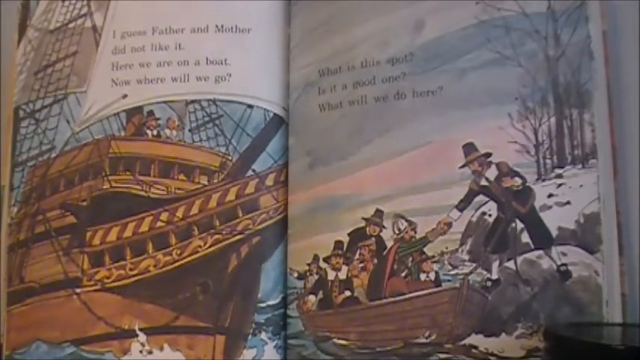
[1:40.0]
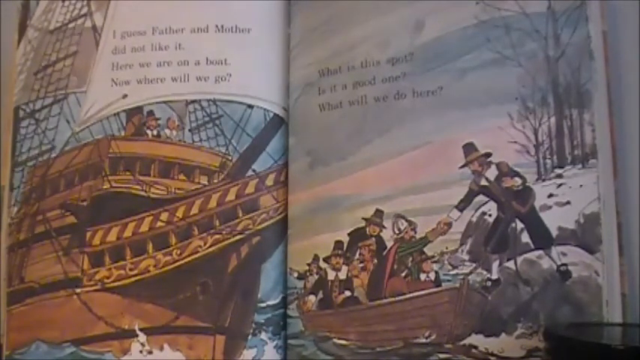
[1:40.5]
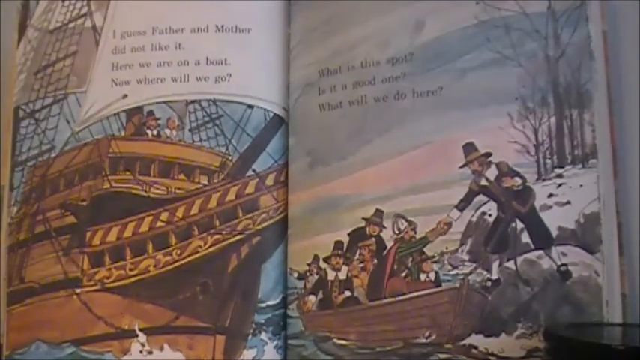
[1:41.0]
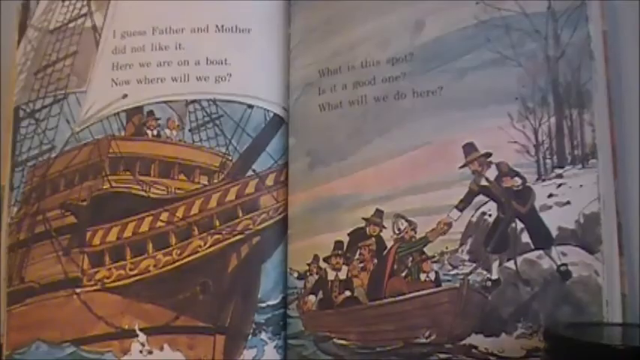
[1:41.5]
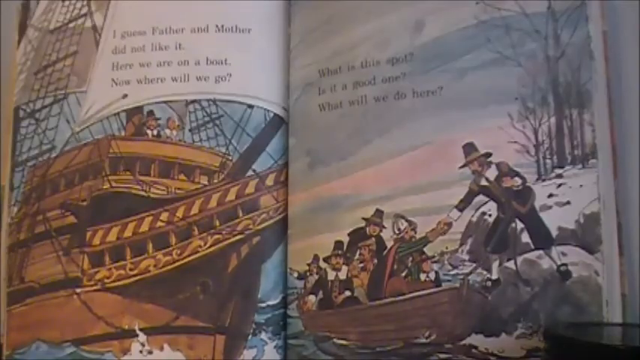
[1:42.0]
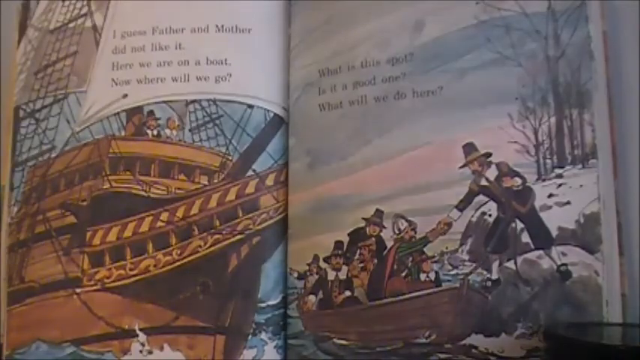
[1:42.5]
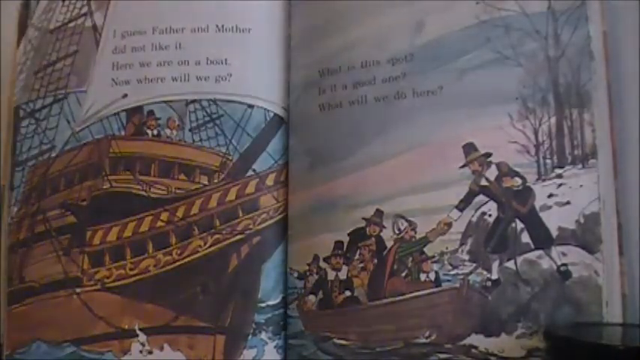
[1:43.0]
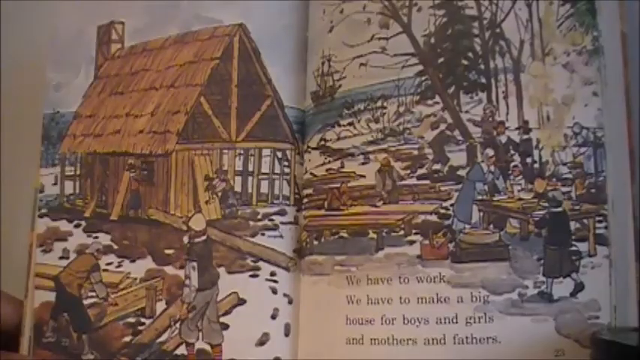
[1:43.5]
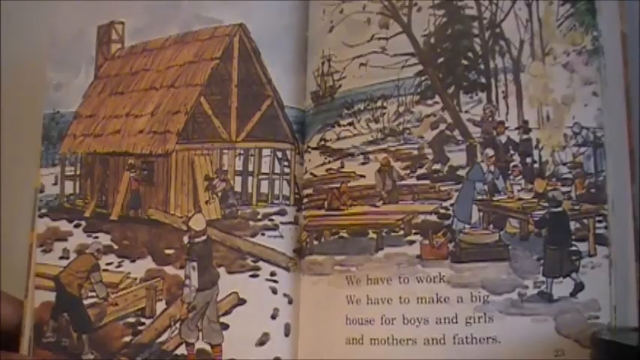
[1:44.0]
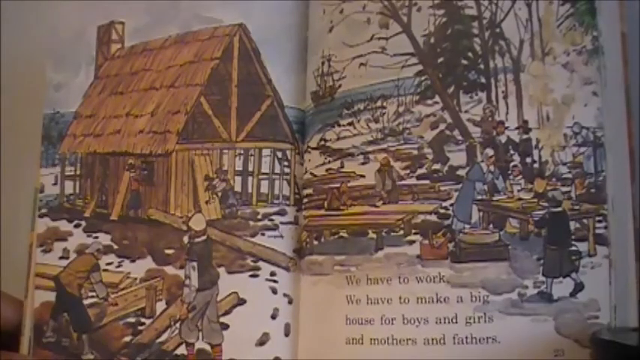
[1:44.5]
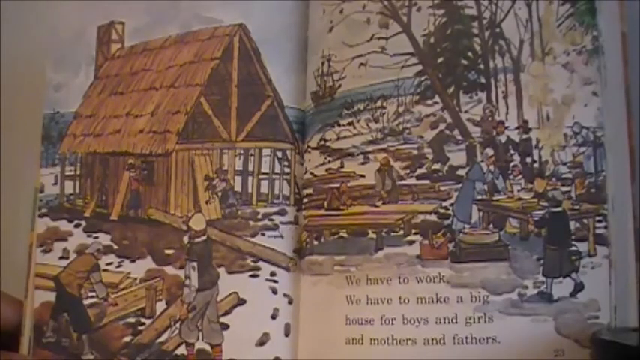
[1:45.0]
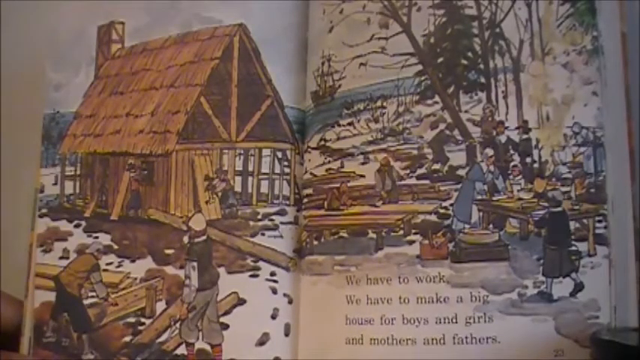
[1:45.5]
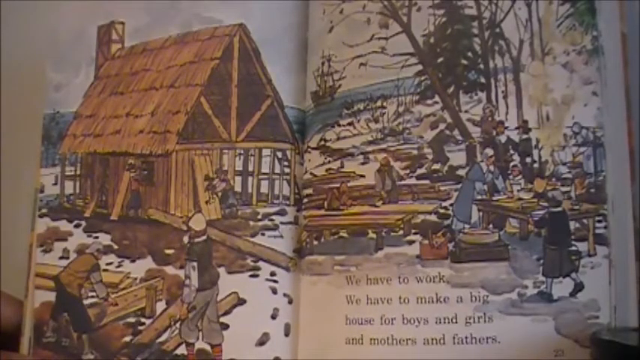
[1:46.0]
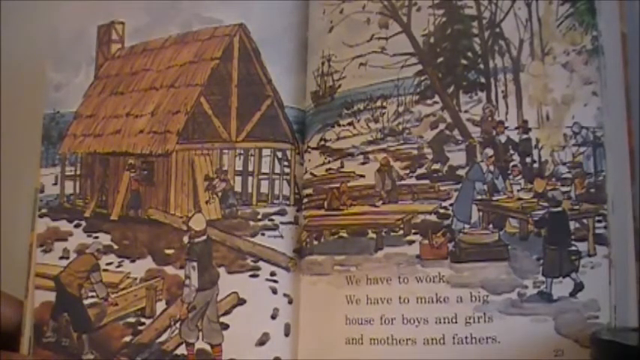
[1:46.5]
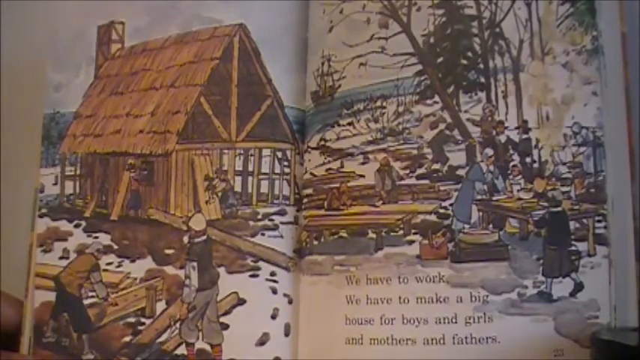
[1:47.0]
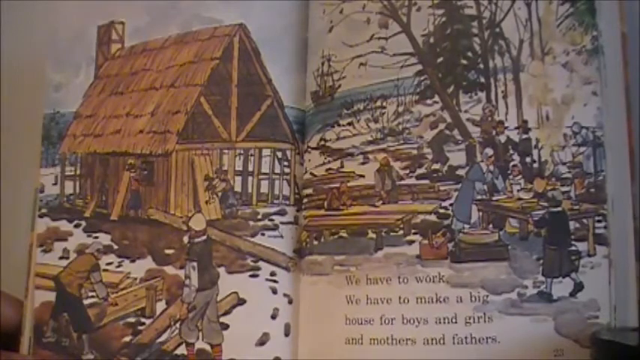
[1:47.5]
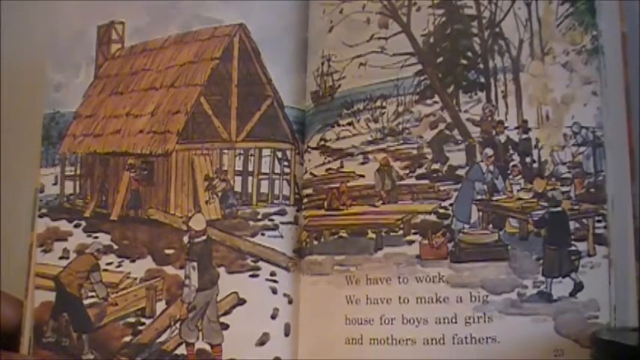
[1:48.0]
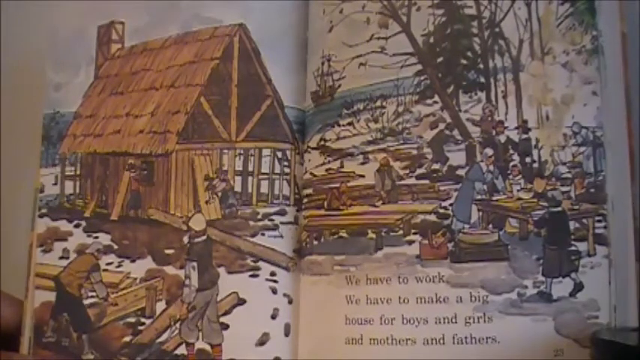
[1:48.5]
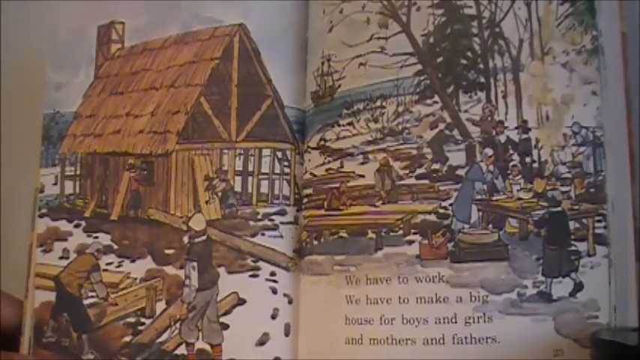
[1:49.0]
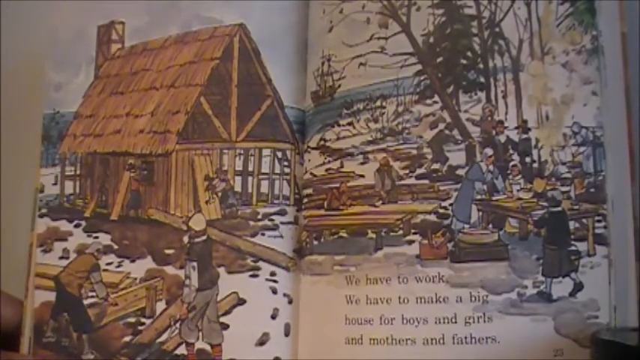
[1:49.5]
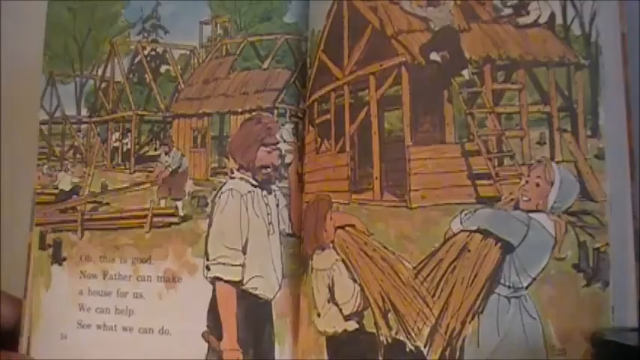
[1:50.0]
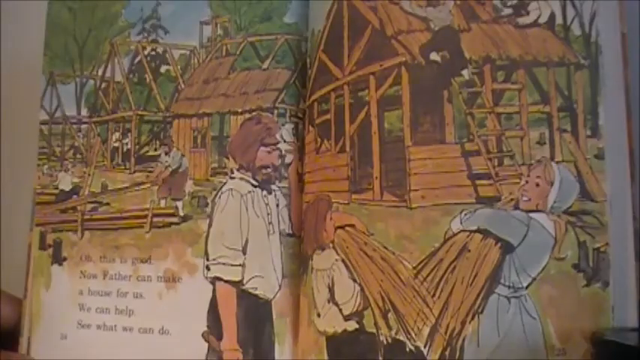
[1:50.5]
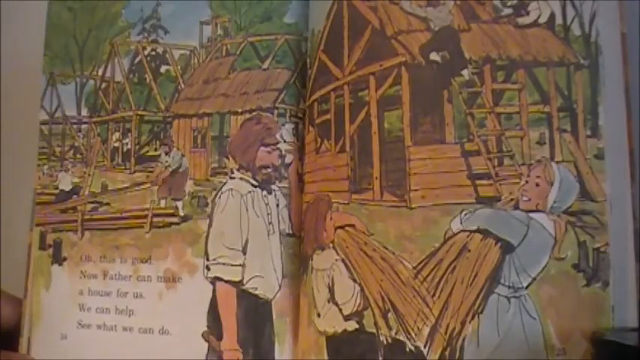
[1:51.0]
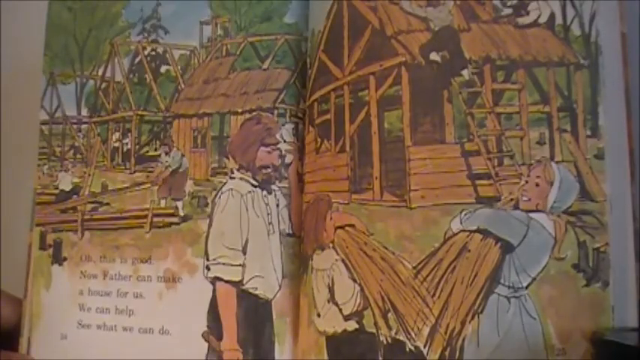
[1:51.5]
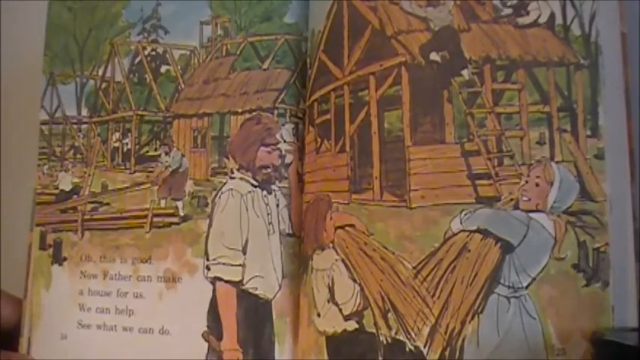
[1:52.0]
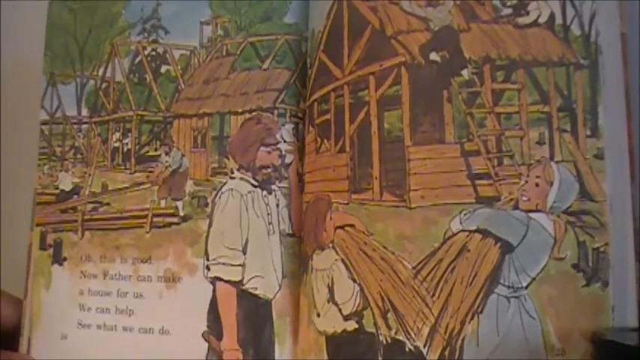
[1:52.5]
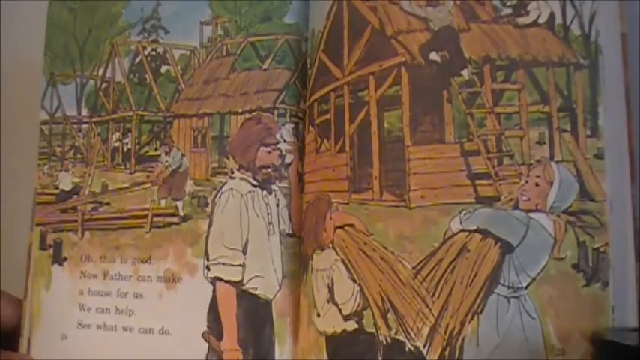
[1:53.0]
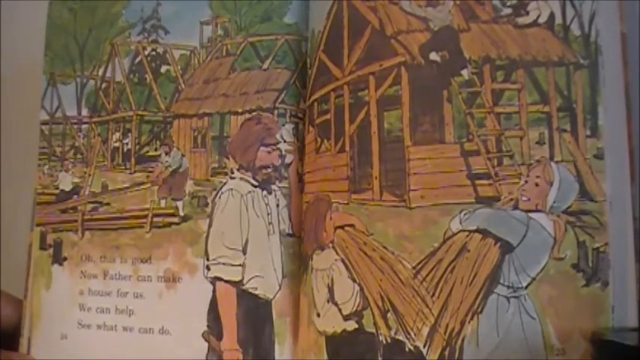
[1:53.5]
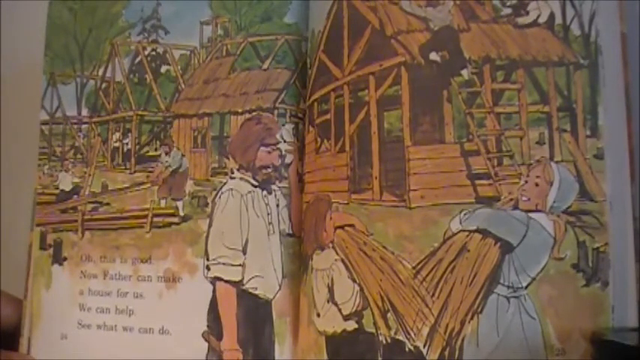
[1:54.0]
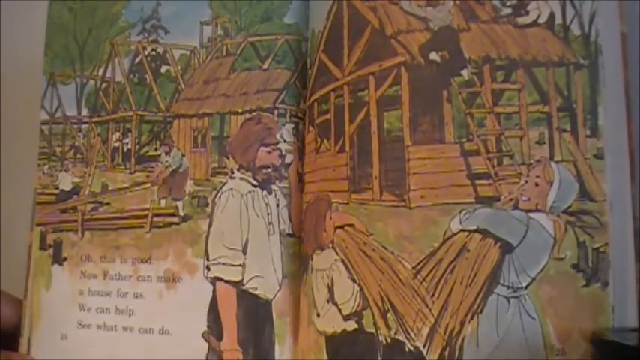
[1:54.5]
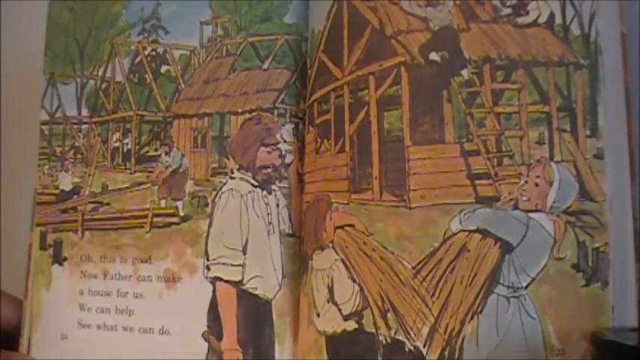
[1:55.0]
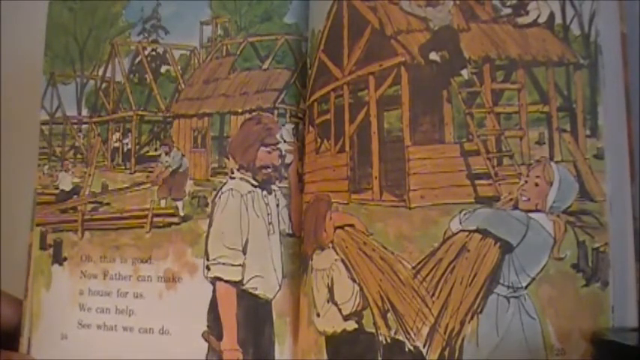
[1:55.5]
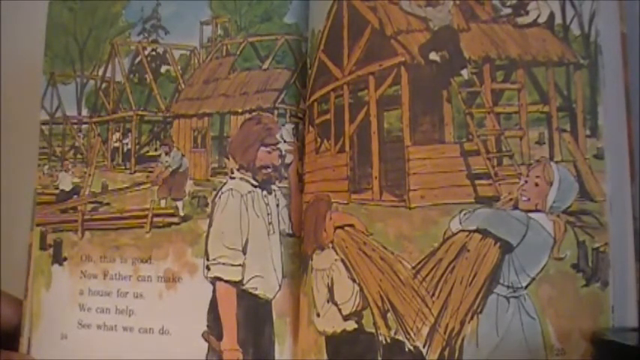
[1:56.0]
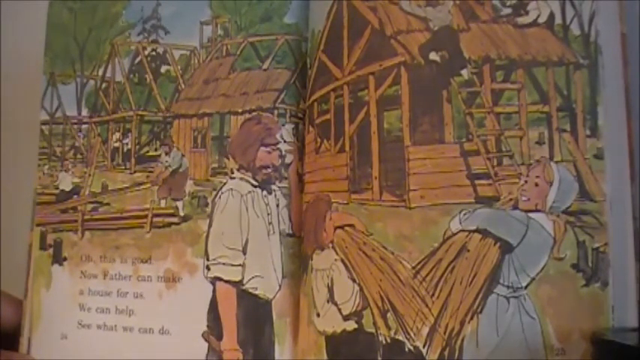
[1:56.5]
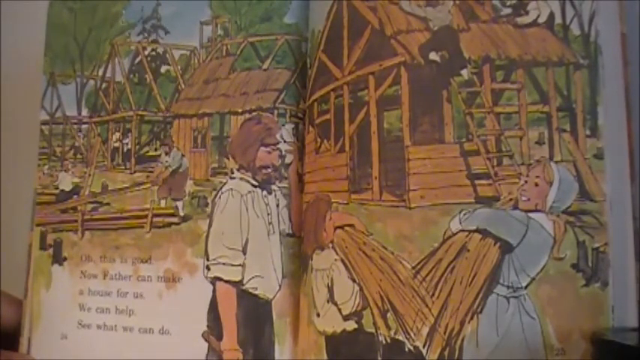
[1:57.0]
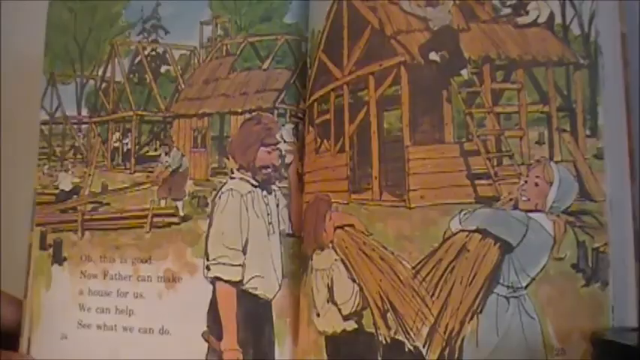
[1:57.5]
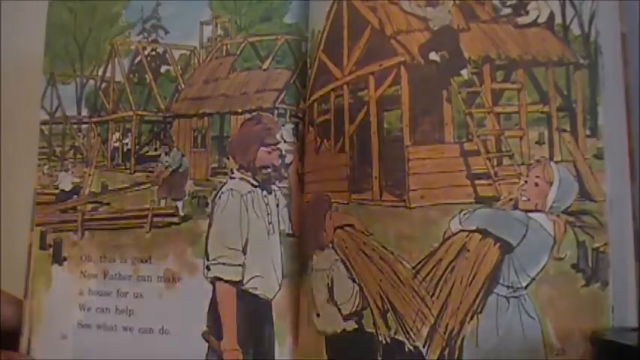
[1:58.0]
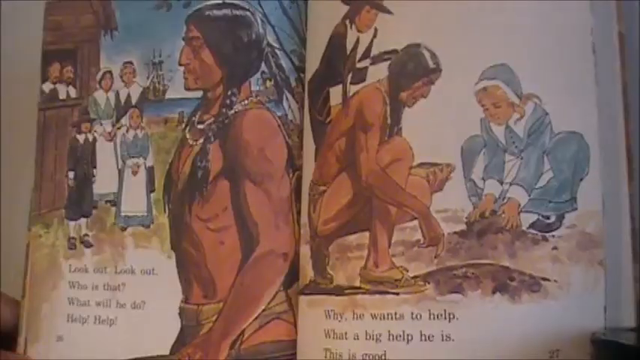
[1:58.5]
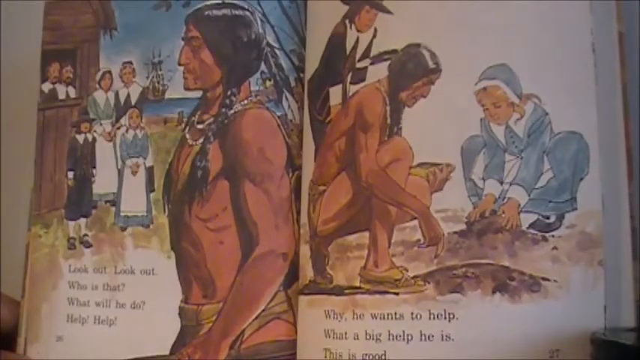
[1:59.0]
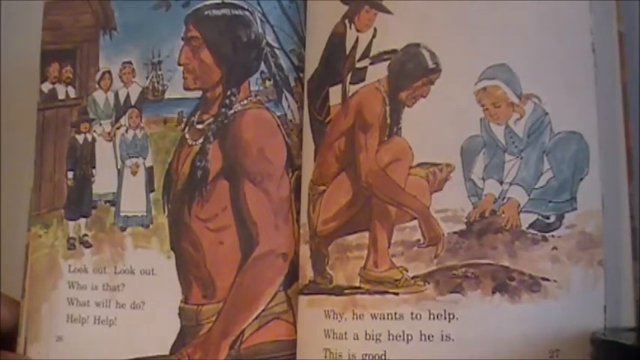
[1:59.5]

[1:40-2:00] The book returns to a double-page spread showing what looks like a house being built. Its frame and roof are up, and people are working on the boards to create the walls. On the right-hand side of the picture, people appear to be felling trees and making lumber. There also seems to be a table with some women serving food. The next double spread shows more buildings under construction: the frames of four buildings at varying stages, with people busy around them. At the bottom right of the image are a man and two children. The man is wiping sweat off his brow, and the two children look like they are carrying hay for thatching the roofs. They all seem to be smiling at each other.